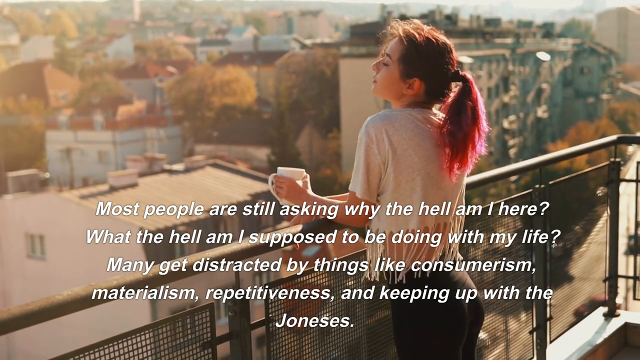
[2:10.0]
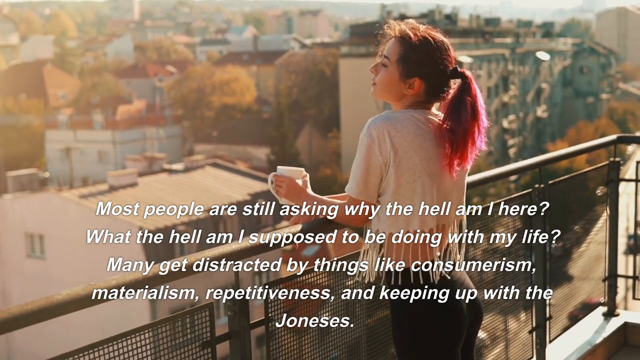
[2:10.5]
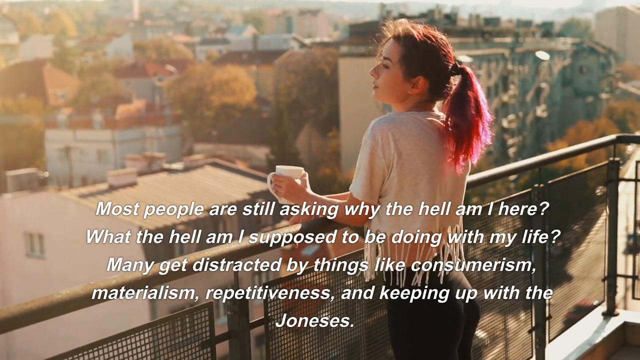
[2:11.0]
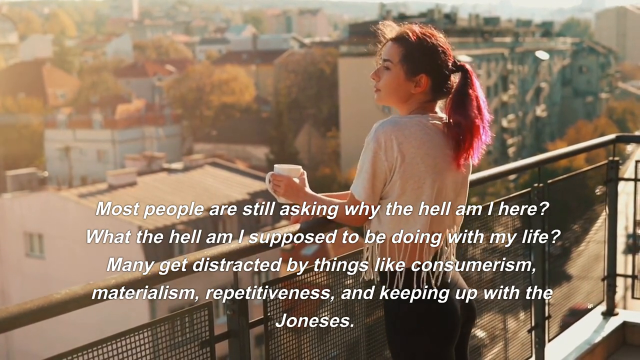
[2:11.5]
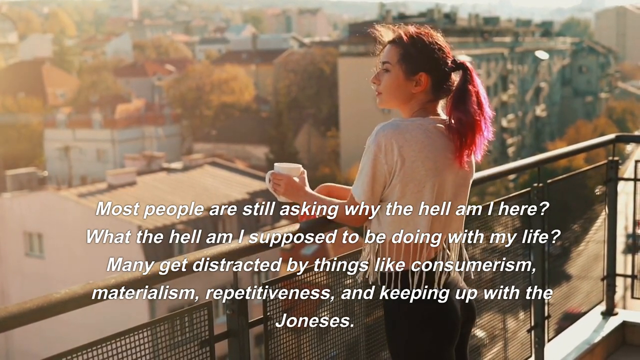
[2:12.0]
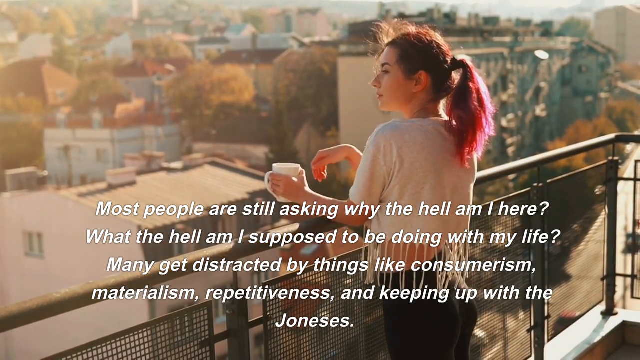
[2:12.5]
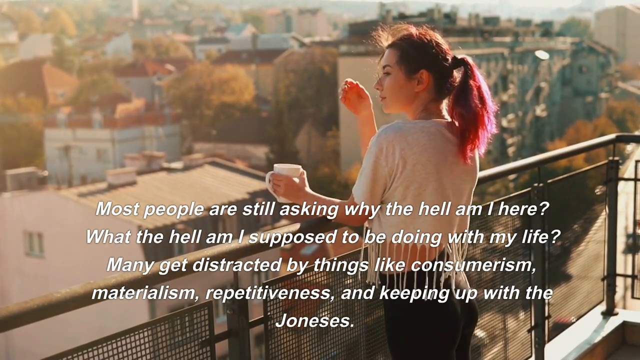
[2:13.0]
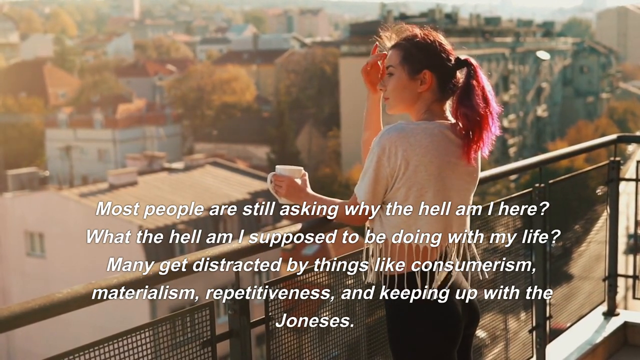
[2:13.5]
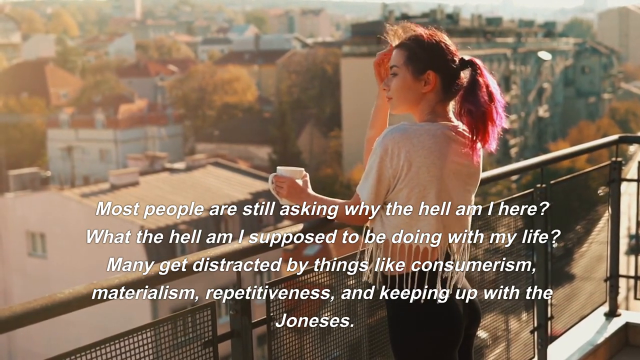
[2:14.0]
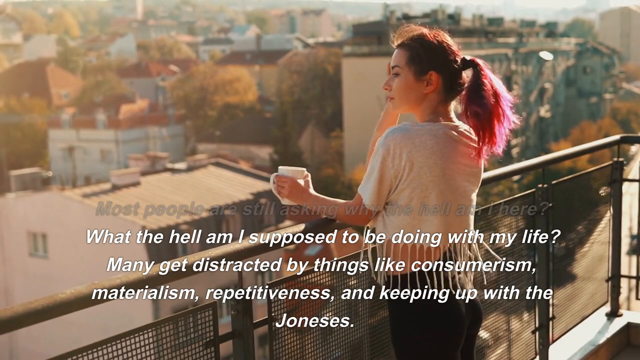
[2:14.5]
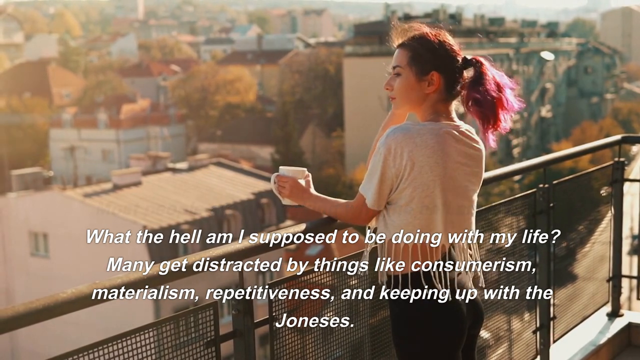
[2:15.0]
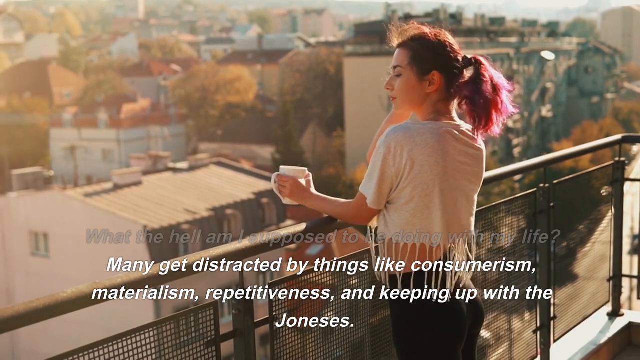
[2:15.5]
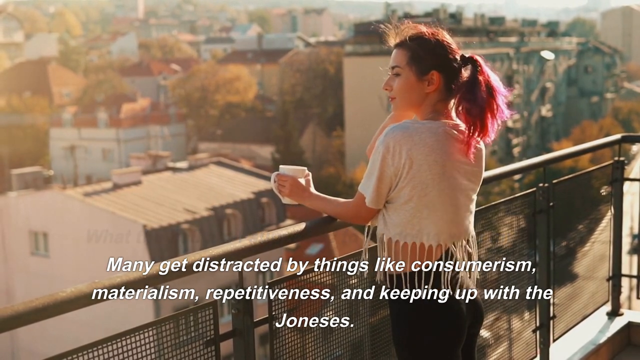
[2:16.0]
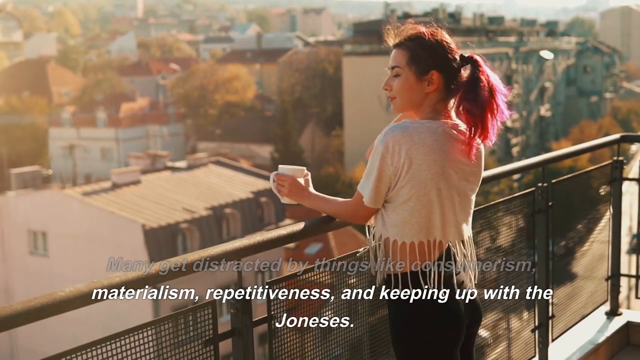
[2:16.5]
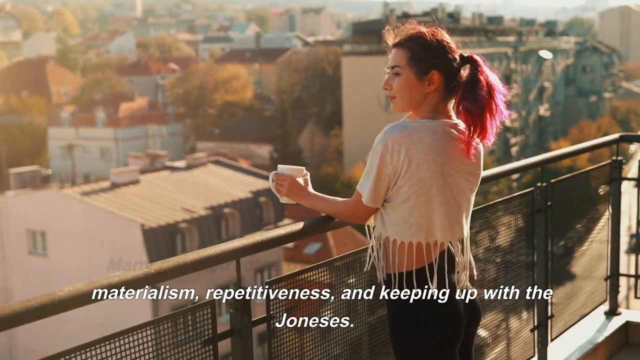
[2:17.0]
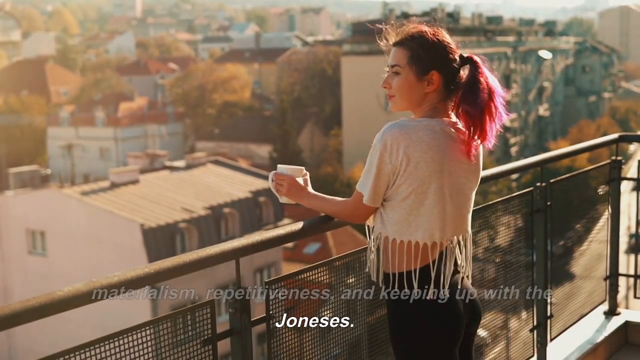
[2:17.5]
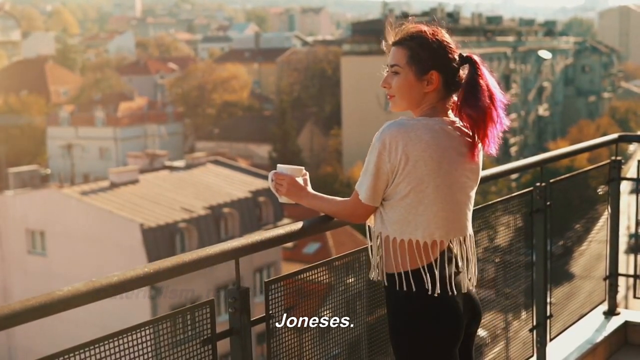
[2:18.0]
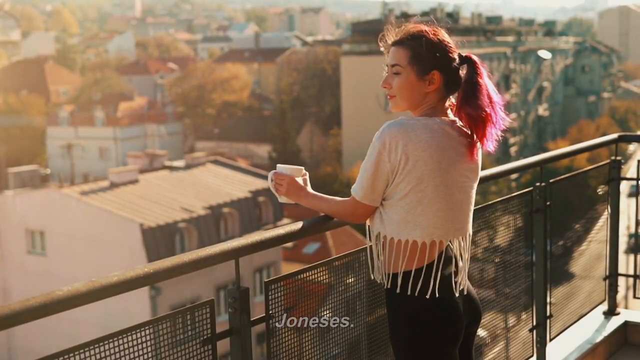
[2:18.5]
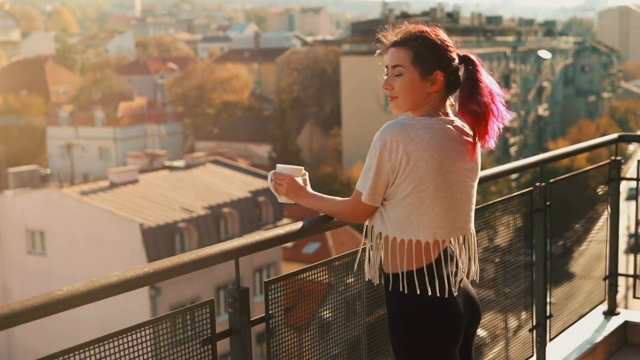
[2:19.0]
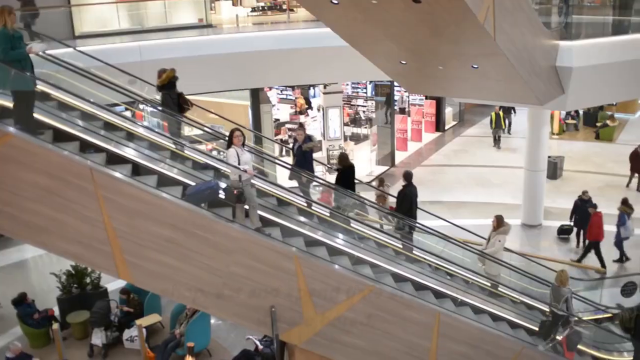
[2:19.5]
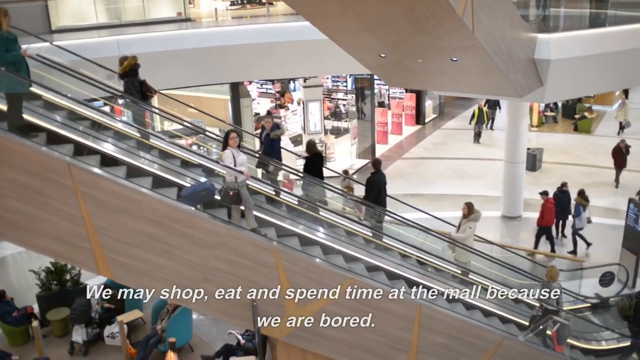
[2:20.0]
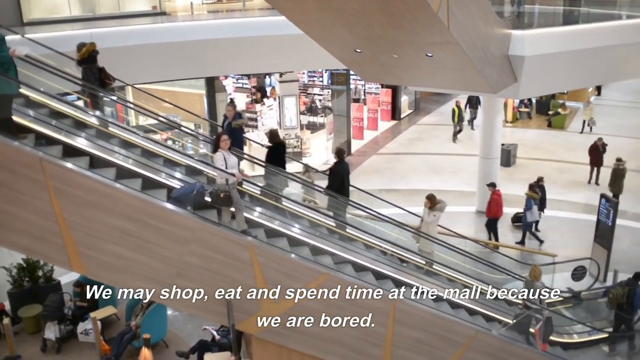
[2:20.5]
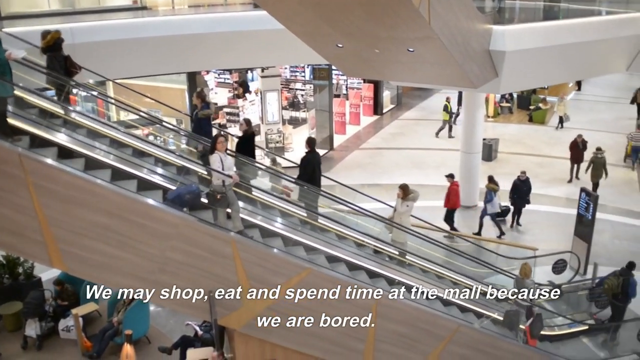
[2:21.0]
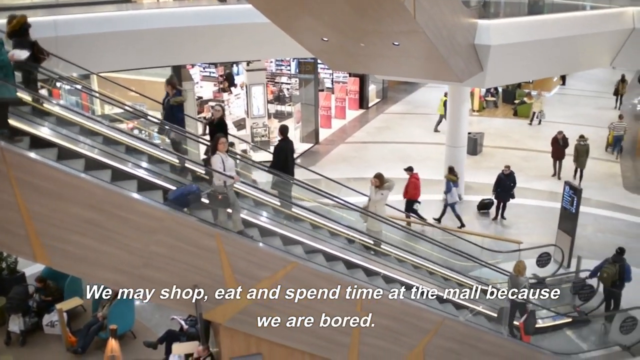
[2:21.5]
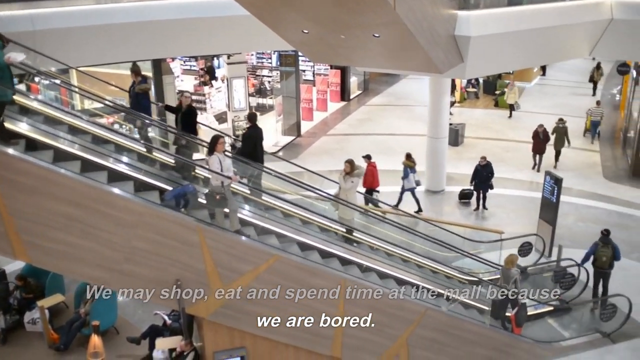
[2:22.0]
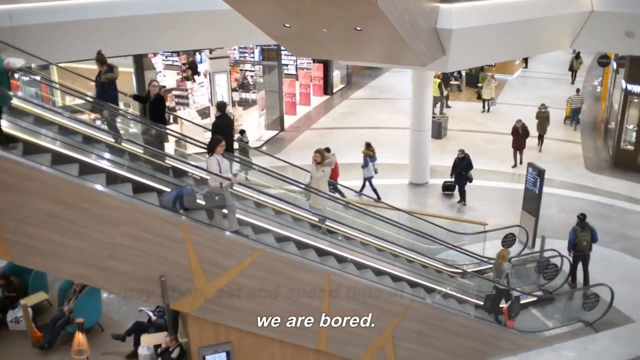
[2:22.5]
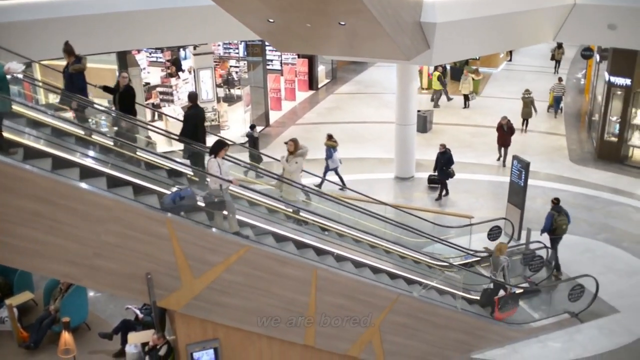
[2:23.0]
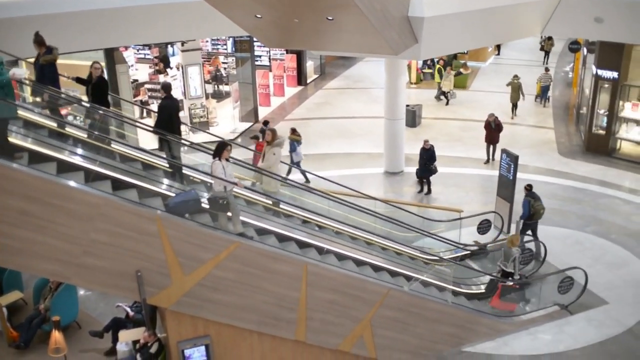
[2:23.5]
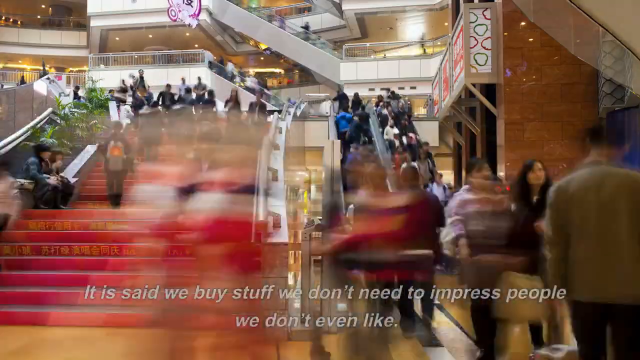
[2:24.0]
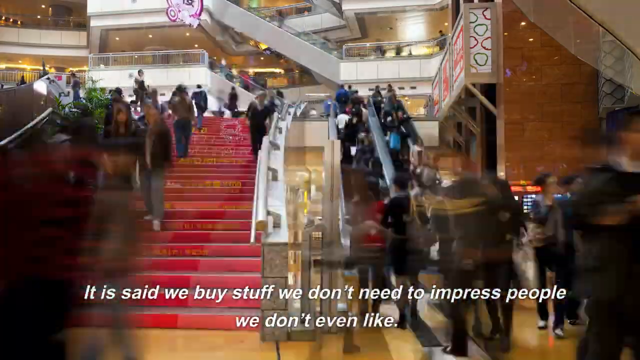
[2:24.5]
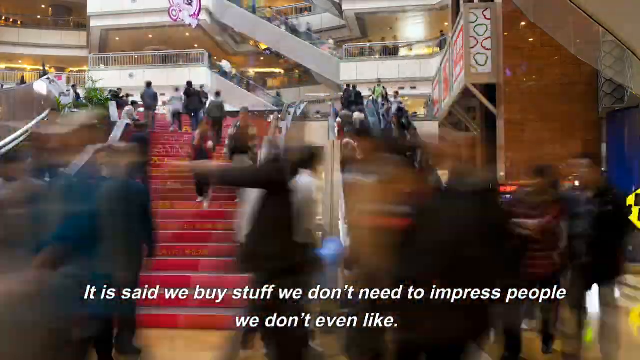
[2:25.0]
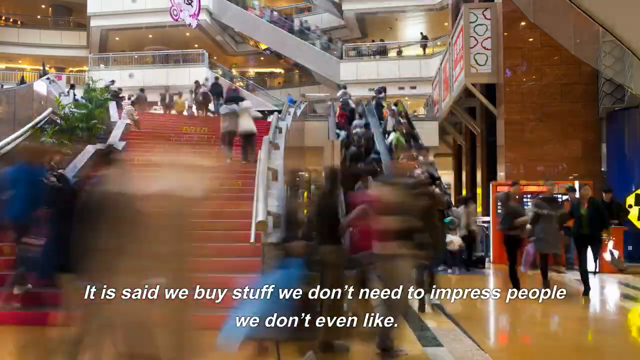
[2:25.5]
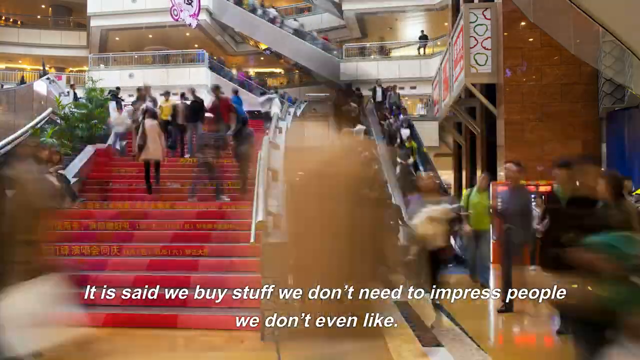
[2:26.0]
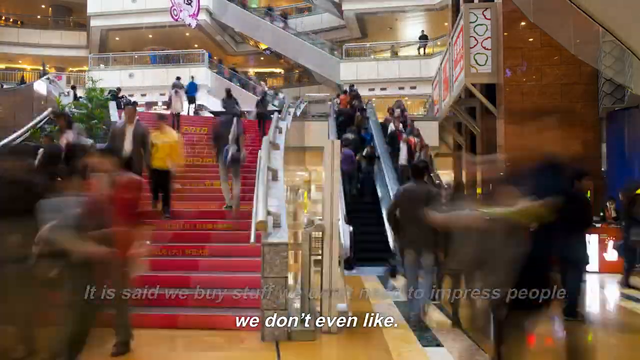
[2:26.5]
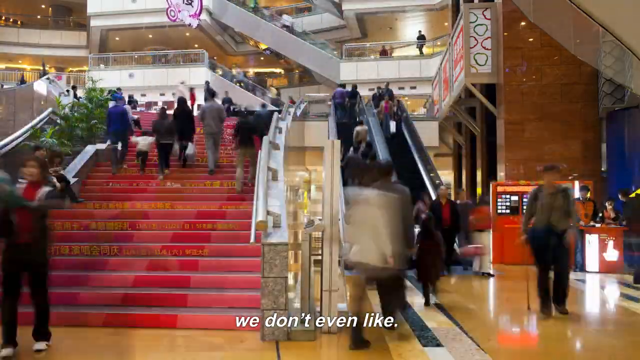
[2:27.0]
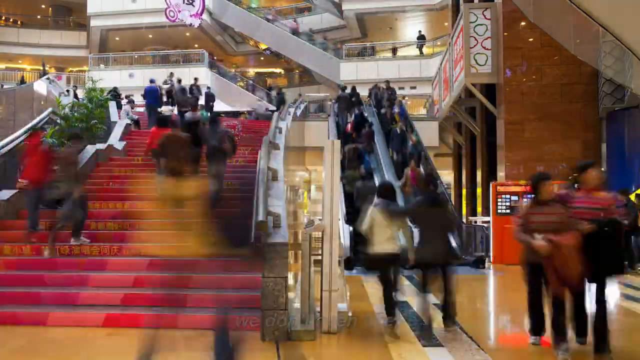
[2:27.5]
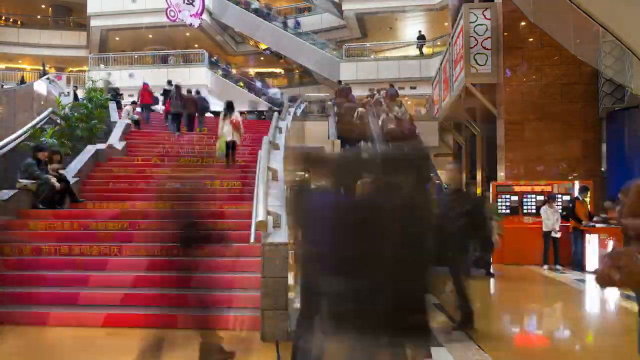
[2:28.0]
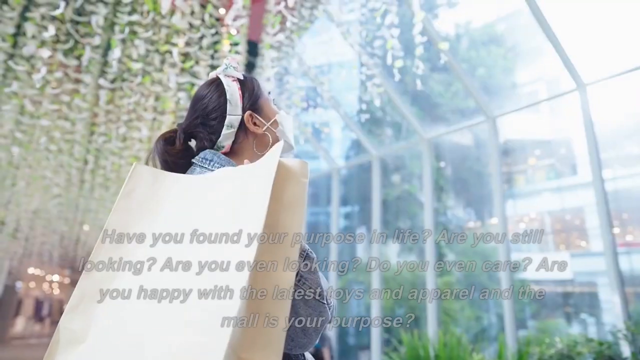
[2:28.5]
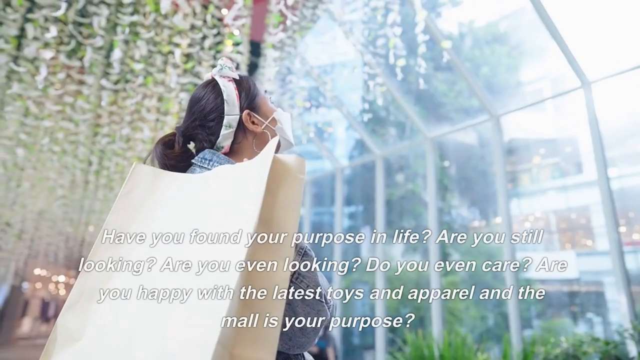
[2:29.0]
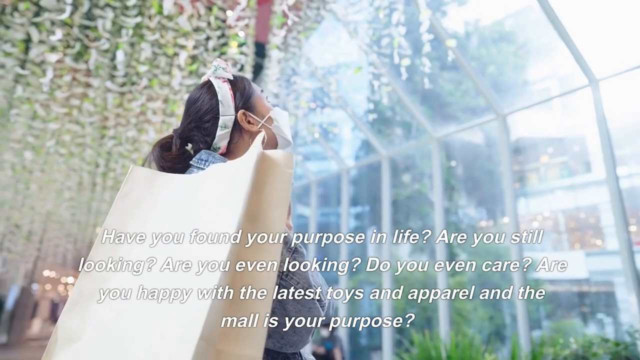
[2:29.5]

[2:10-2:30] The woman on the balcony looks very relaxed and plays with her hair. The scene shifts to a shopping mall, looking down an escalator where a woman stands resting a suitcase on the escalator, followed by a sped-up view of many people moving through a shopping mall. The caption states: "we may shop, eat and spend time at the mall because we are bored. It is said we buy stuff we don't need to impress people we don't even like." It then asks: "have you found your purpose in life? Are you still looking? Are you even looking? Do you even care? Are you happy with the latest toys and apparel? And the mall is your purpose?"